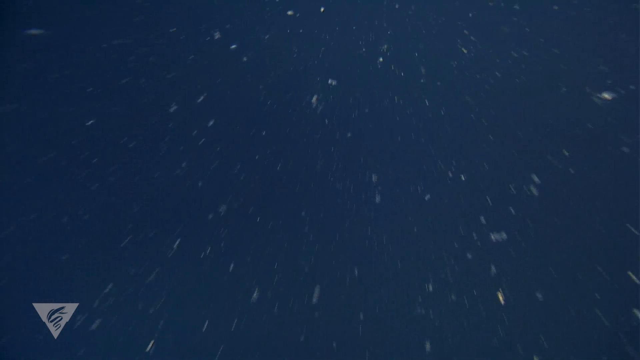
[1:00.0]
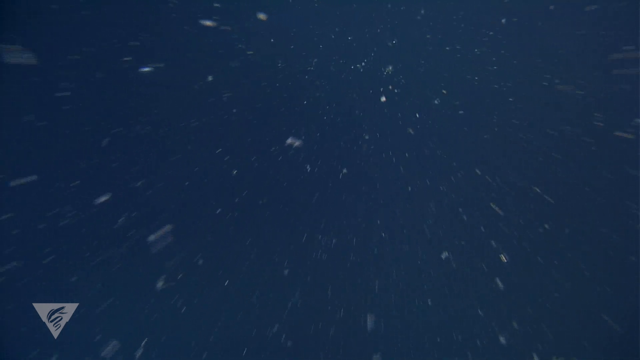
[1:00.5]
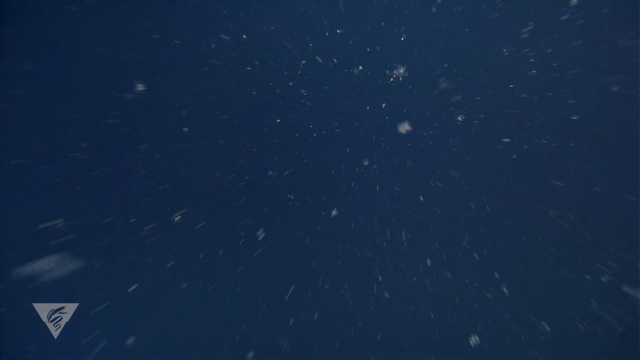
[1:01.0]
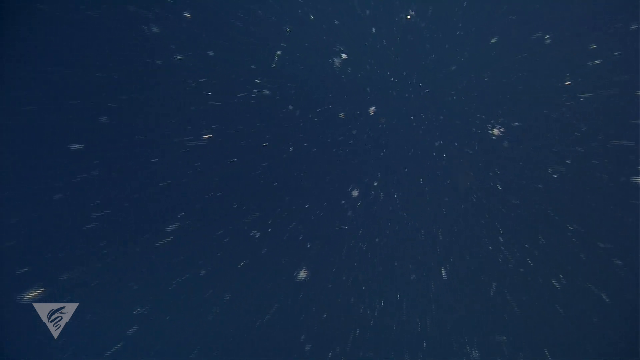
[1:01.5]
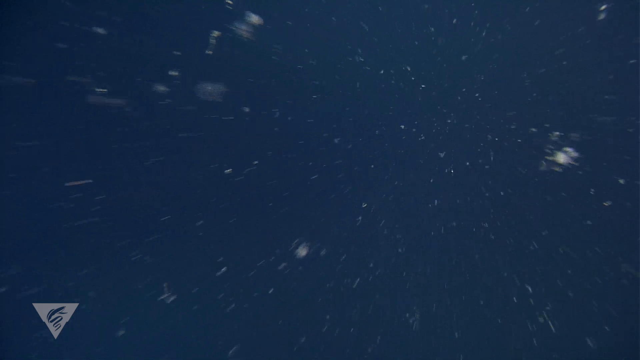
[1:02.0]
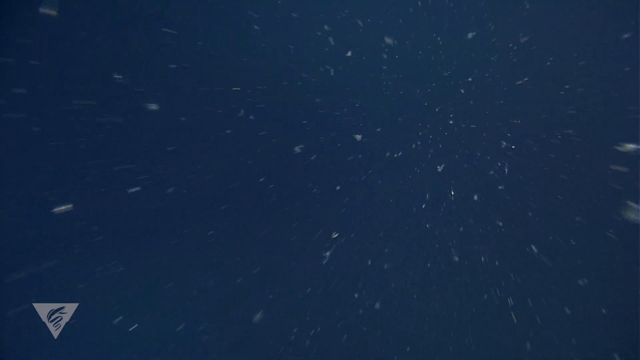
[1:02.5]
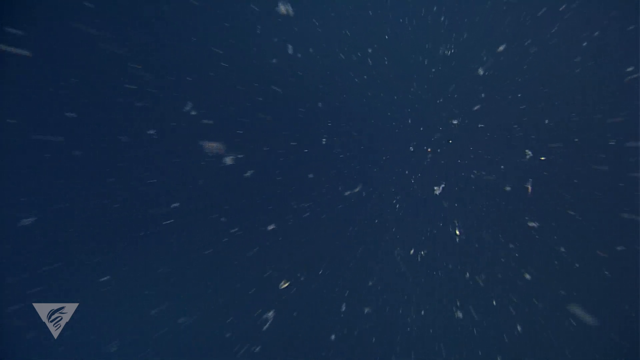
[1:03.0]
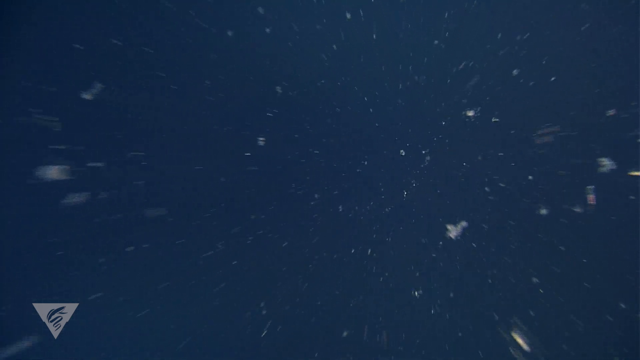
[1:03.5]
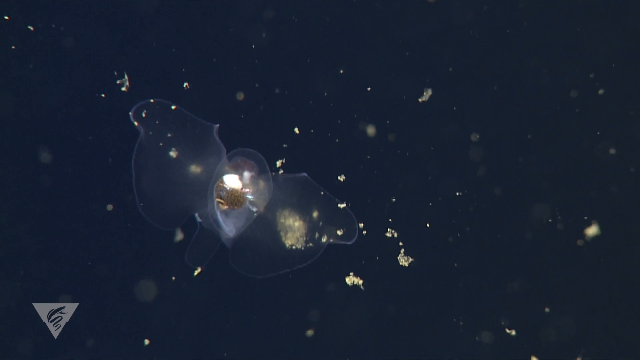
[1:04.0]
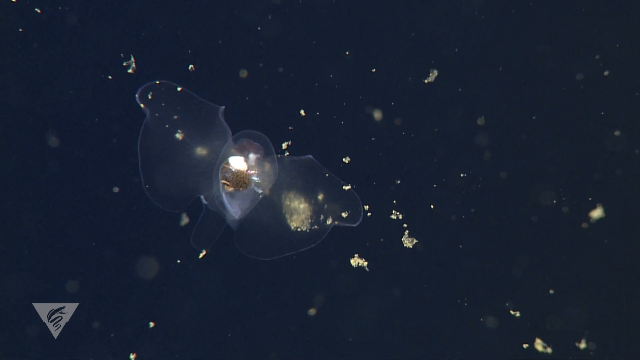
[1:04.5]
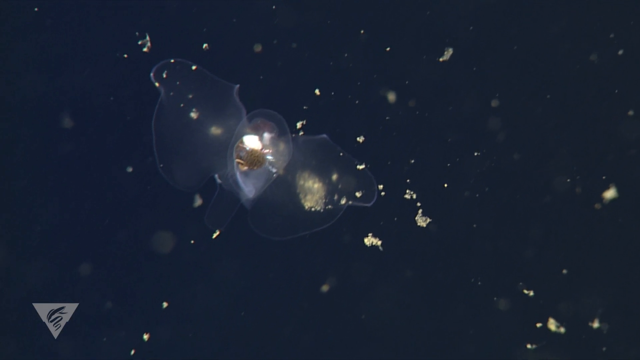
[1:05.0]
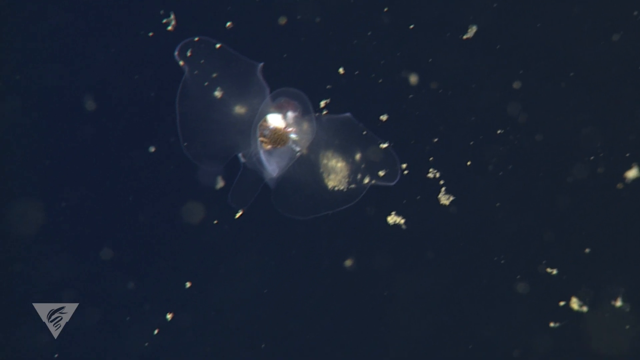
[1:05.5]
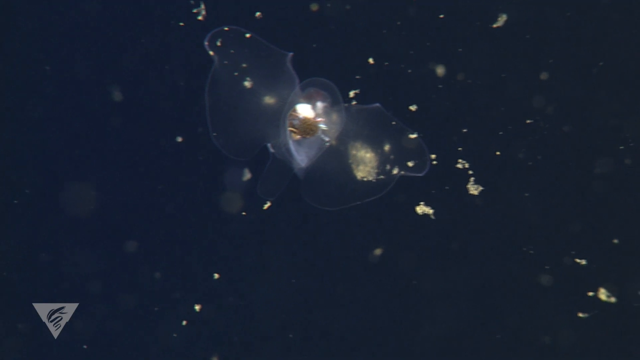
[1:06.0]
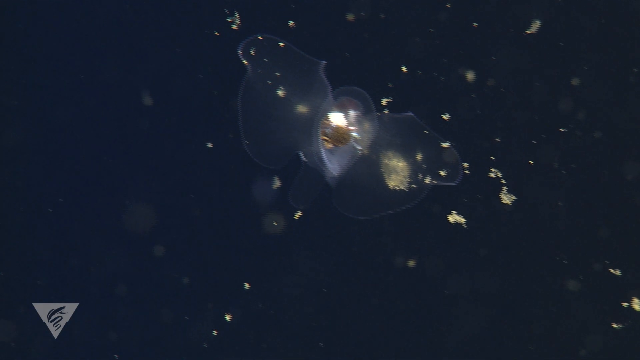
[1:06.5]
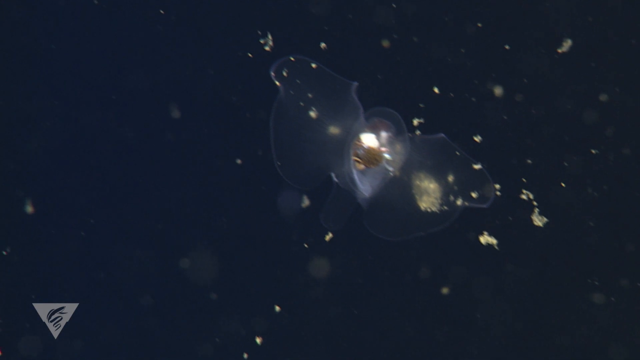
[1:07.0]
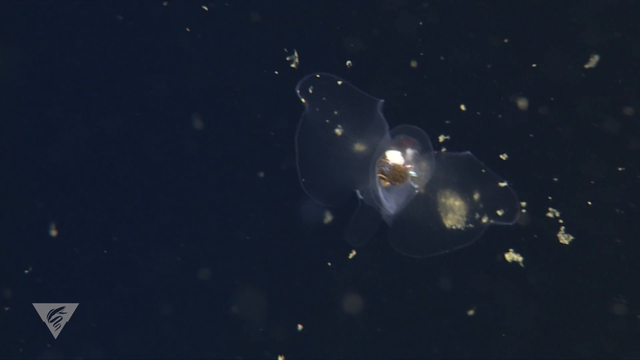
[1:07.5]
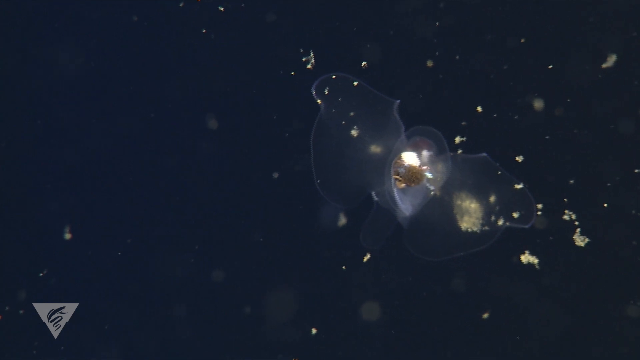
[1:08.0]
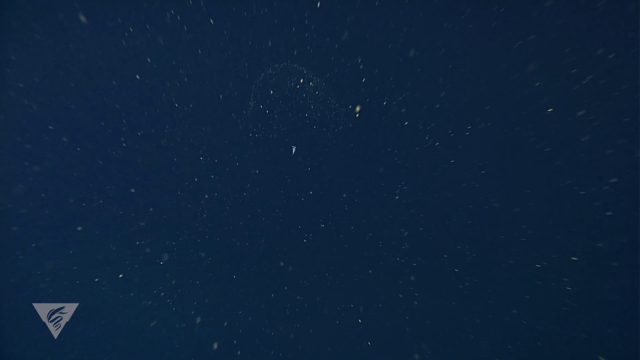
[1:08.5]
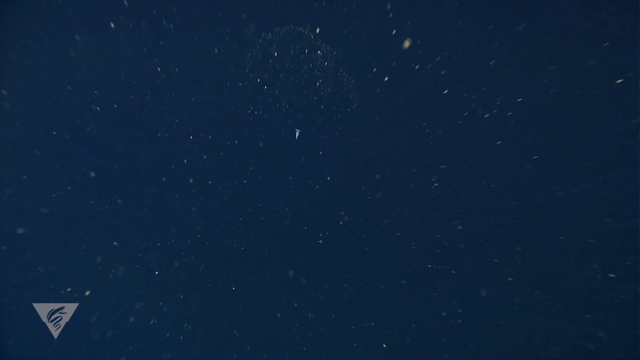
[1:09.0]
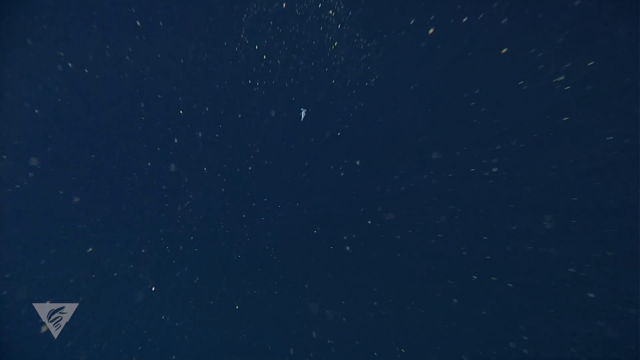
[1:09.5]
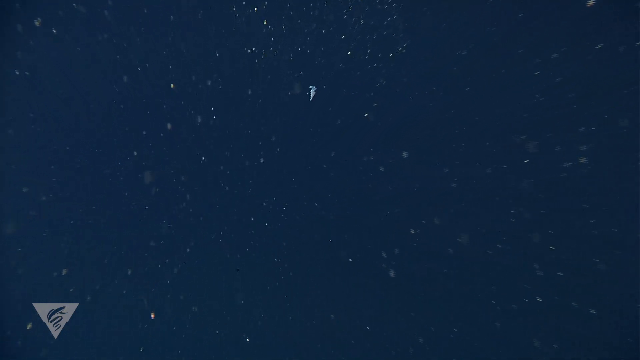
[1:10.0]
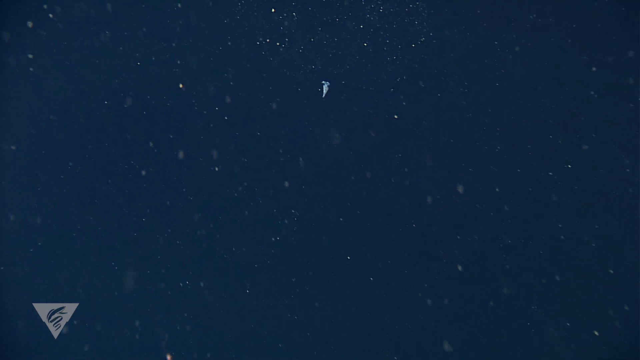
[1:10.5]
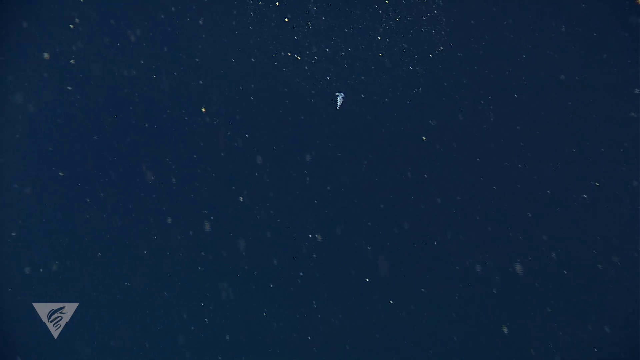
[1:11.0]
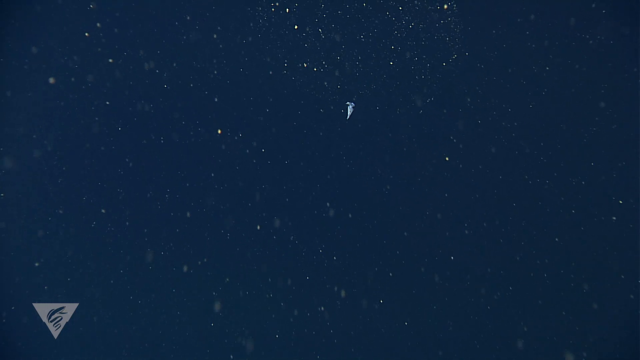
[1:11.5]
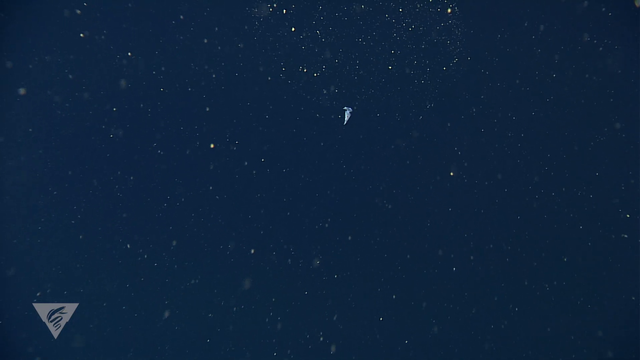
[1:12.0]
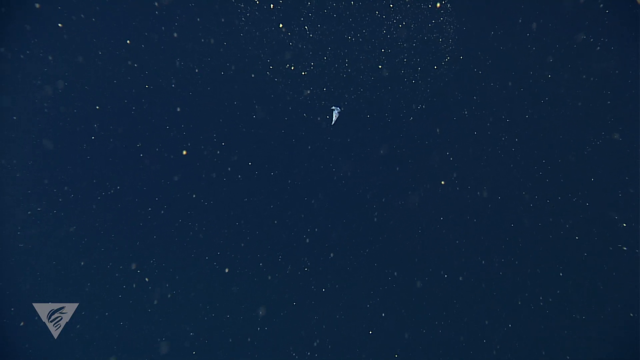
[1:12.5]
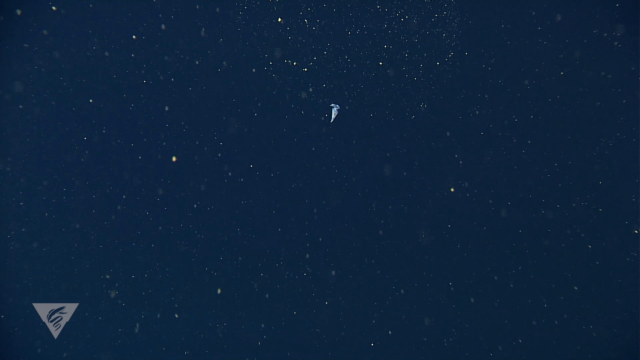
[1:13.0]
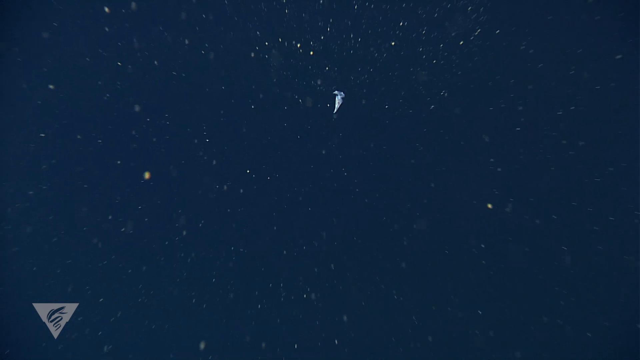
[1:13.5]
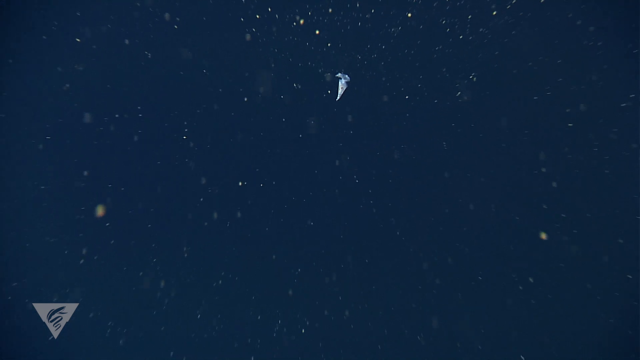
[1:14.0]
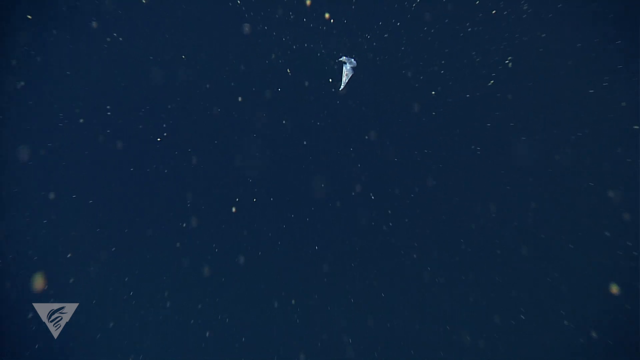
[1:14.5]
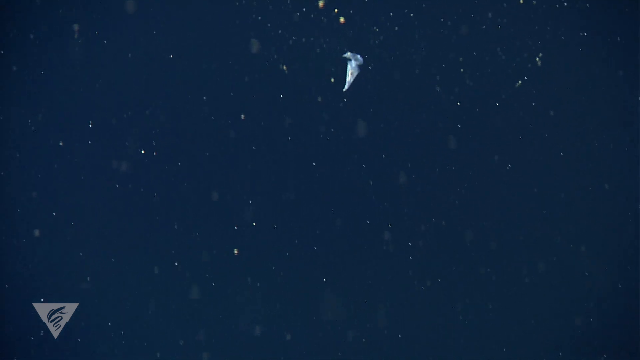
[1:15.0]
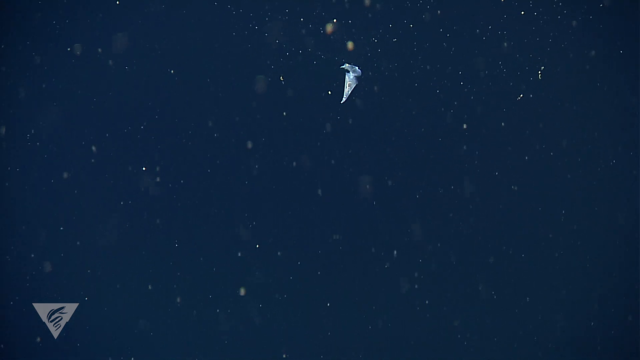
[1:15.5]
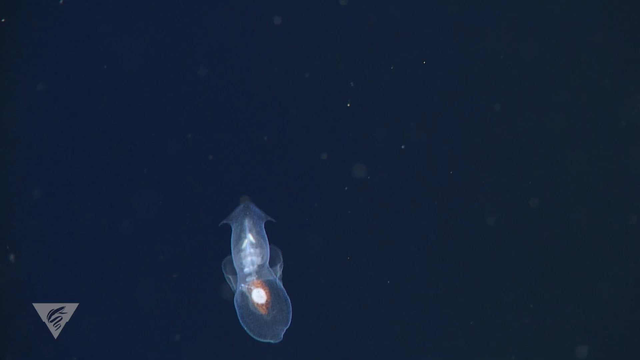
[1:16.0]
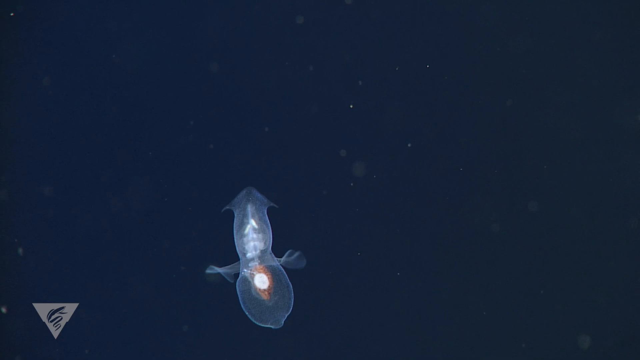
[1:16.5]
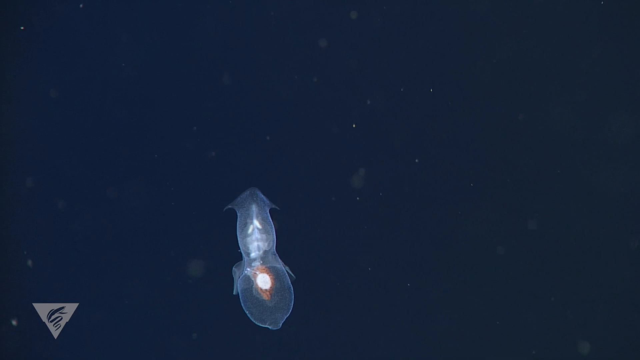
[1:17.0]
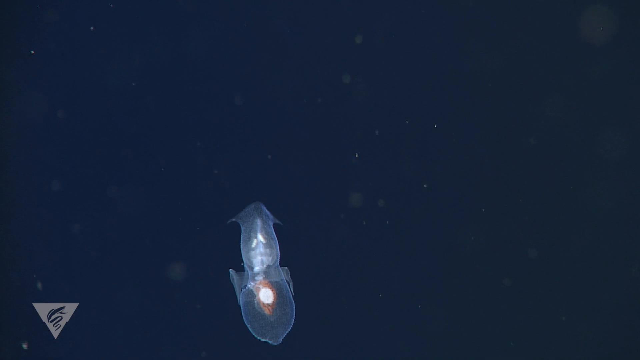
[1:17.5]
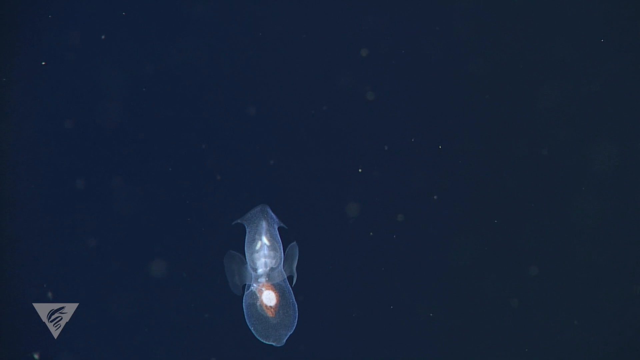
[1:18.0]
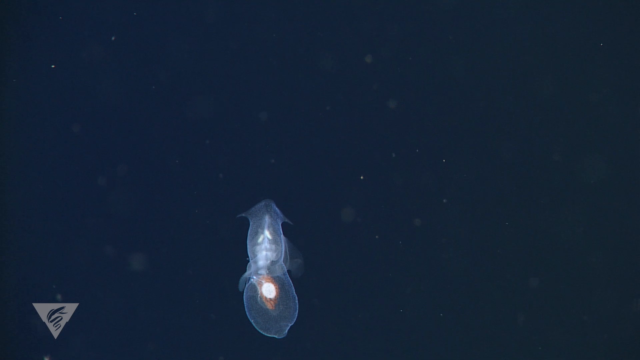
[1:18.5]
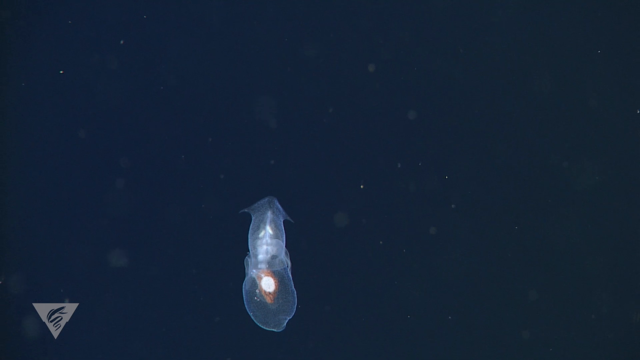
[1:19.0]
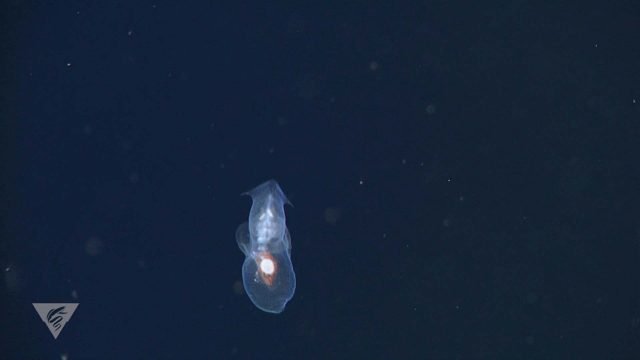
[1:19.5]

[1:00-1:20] The camera moves through the sea past many different crustaceans and other underwater creatures. A very clear pteropod with translucent skin appears, its internal organs visible; it might be partially bioluminescent, though that could just be light reflecting off it. There are different types of pteropods. One is almost completely translucent, with flippers off to the sides that look like wings, and organs visible in the center of its body through the translucent body. Some of the pteropods appear to be propelling themselves through the water with the flippers on the sides of their bodies, while others seem to let the current move them around.